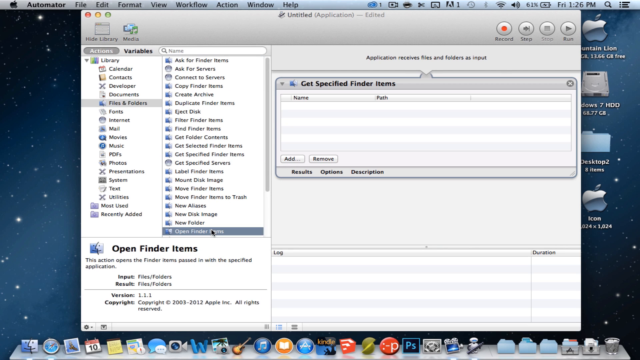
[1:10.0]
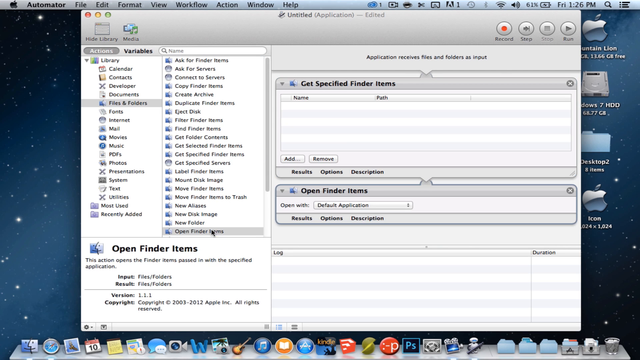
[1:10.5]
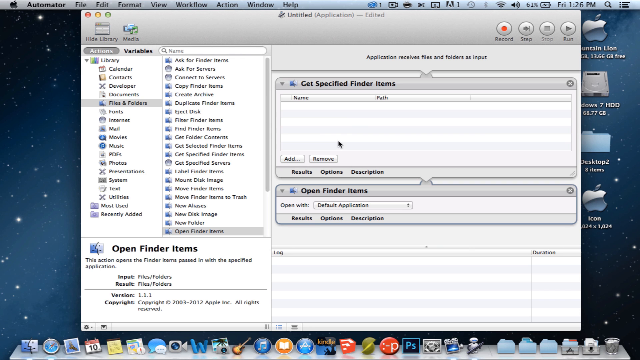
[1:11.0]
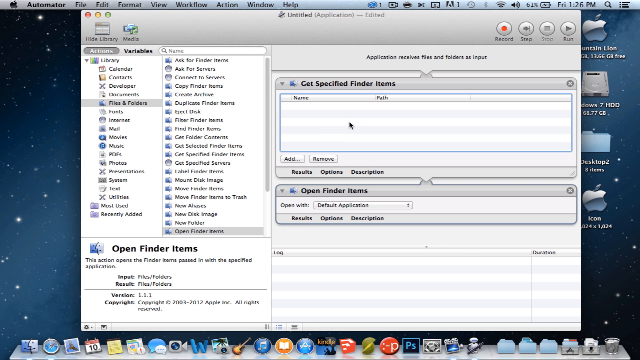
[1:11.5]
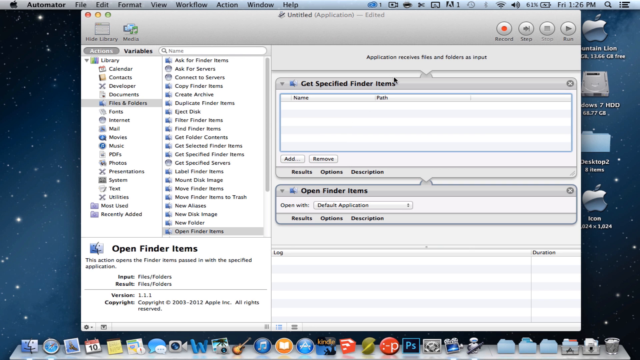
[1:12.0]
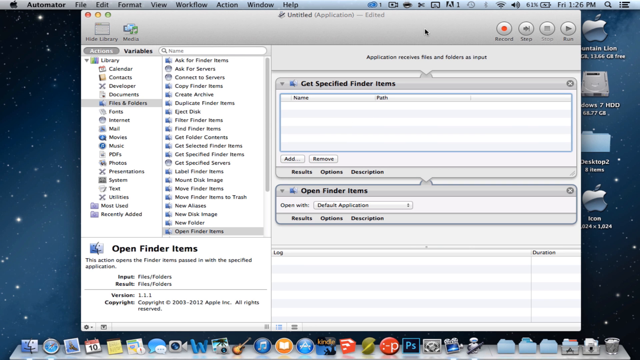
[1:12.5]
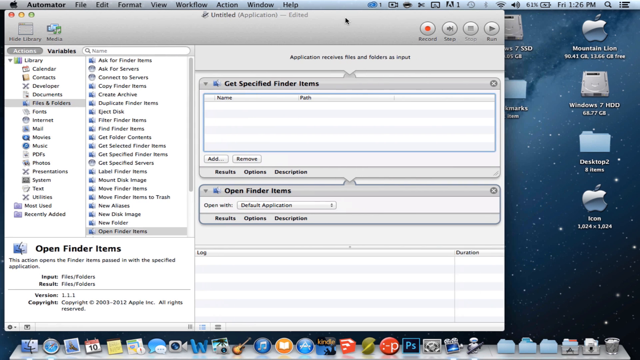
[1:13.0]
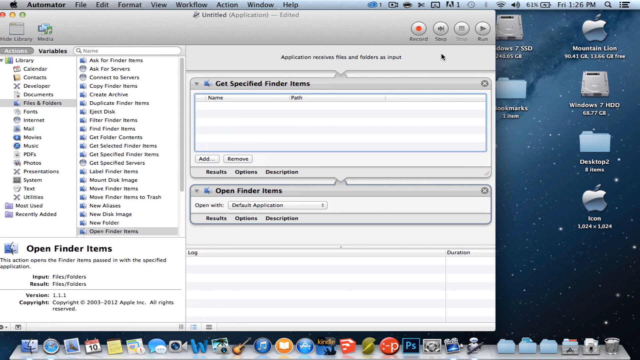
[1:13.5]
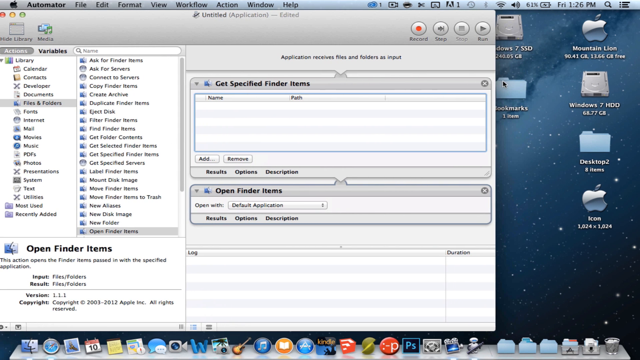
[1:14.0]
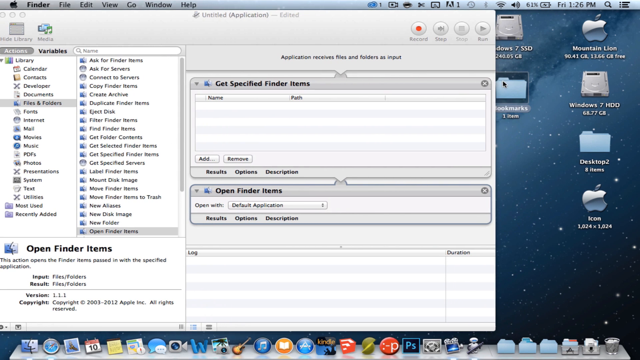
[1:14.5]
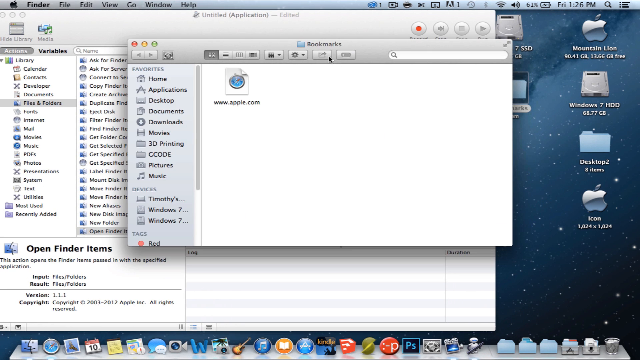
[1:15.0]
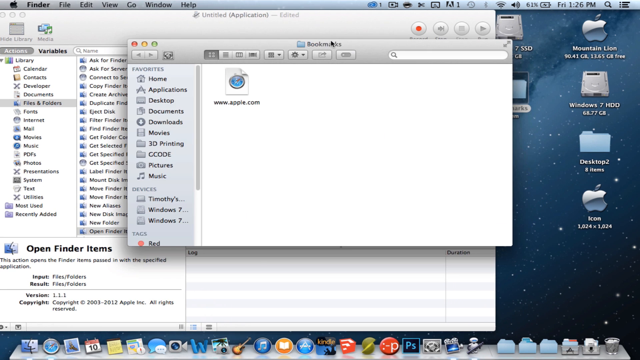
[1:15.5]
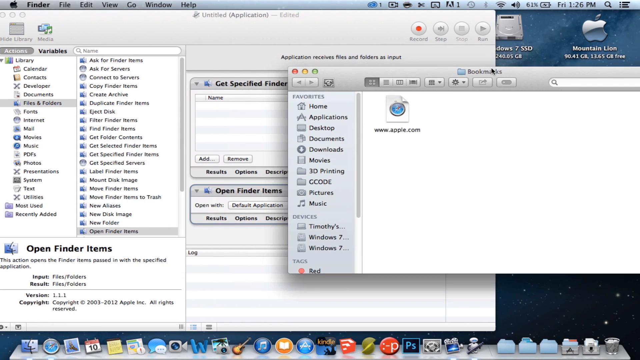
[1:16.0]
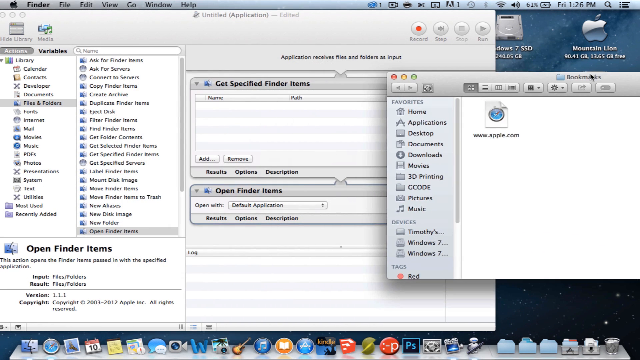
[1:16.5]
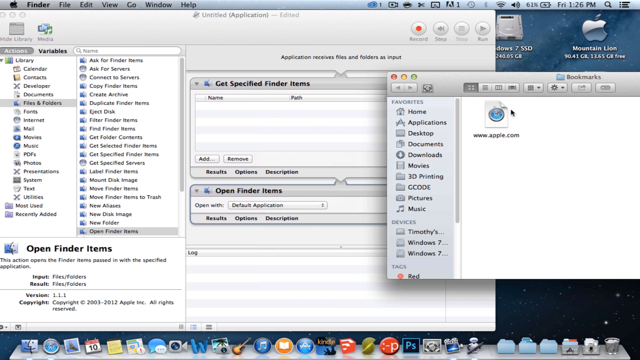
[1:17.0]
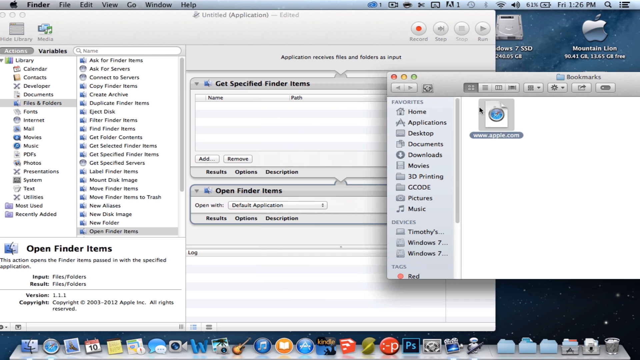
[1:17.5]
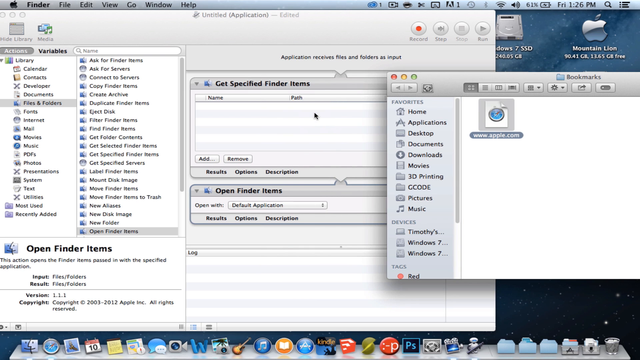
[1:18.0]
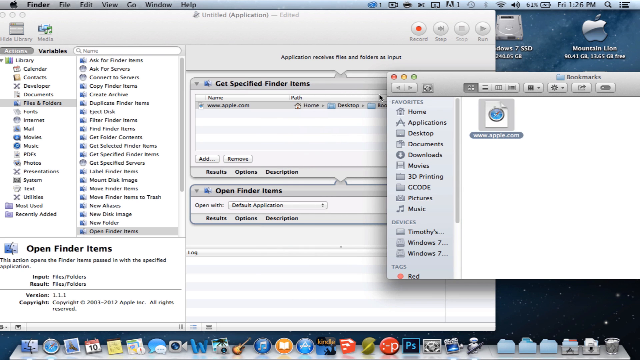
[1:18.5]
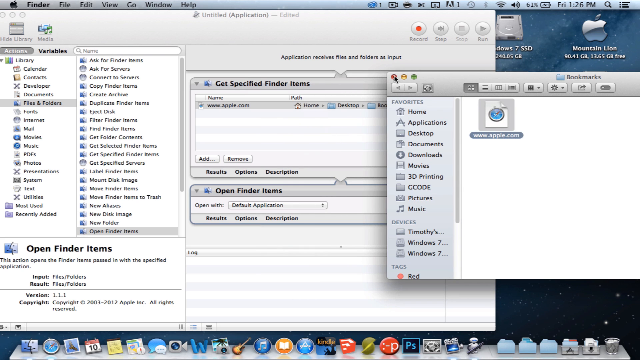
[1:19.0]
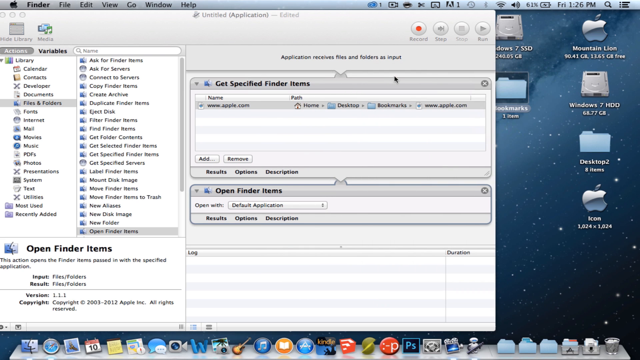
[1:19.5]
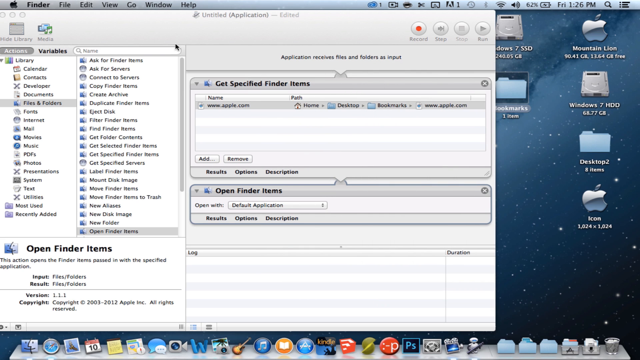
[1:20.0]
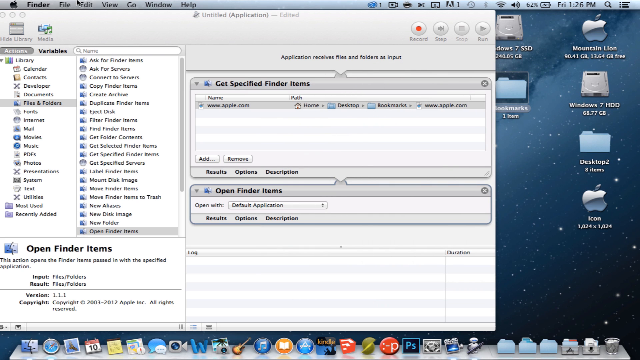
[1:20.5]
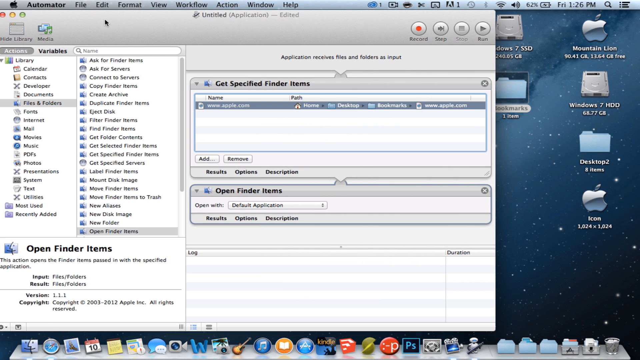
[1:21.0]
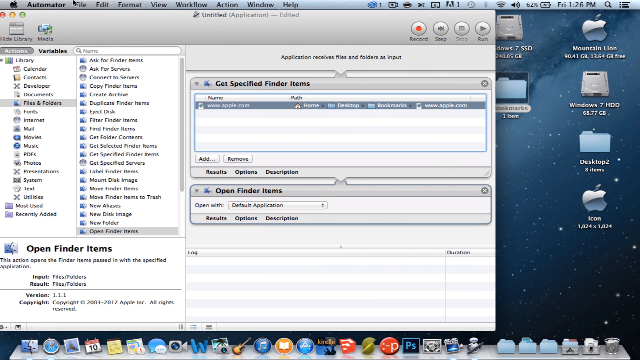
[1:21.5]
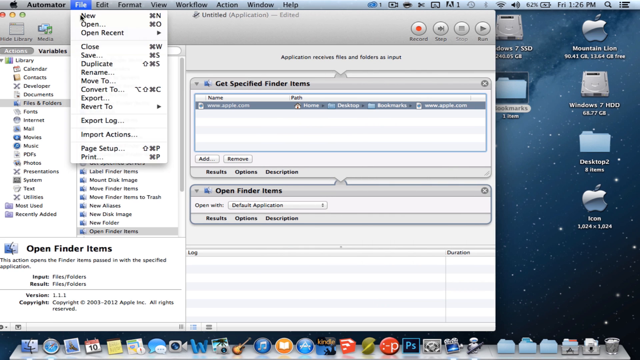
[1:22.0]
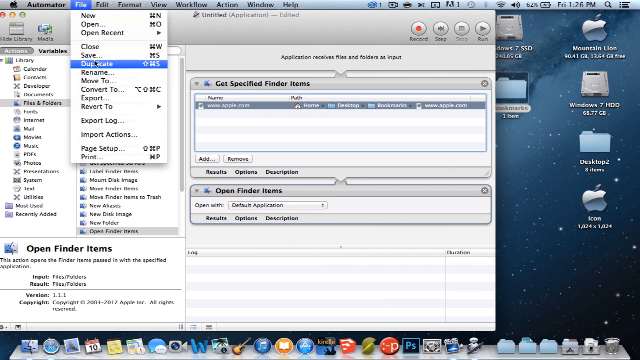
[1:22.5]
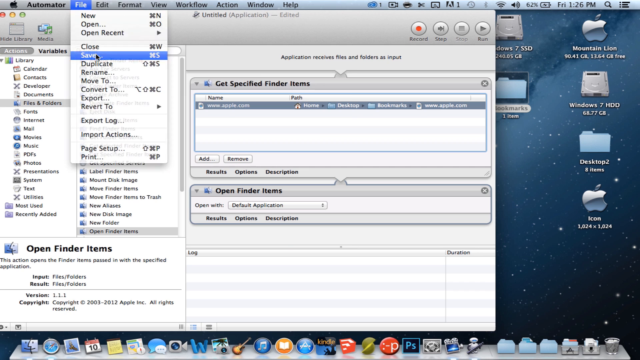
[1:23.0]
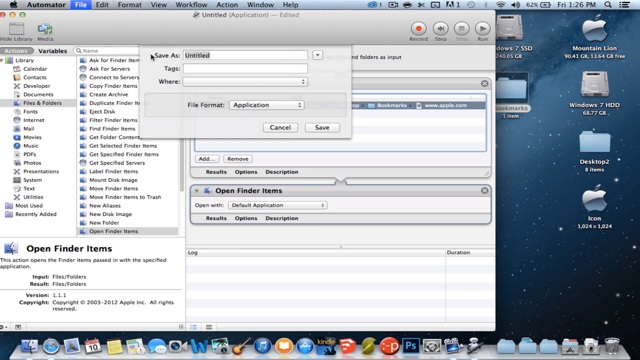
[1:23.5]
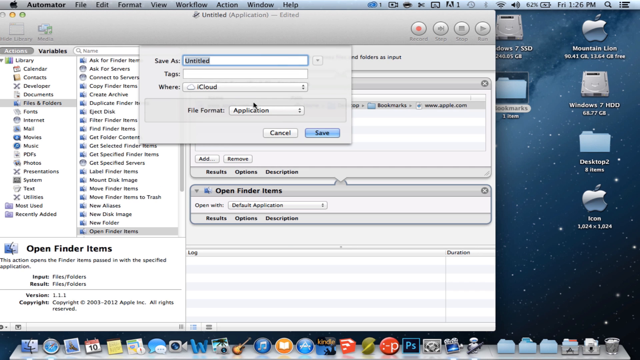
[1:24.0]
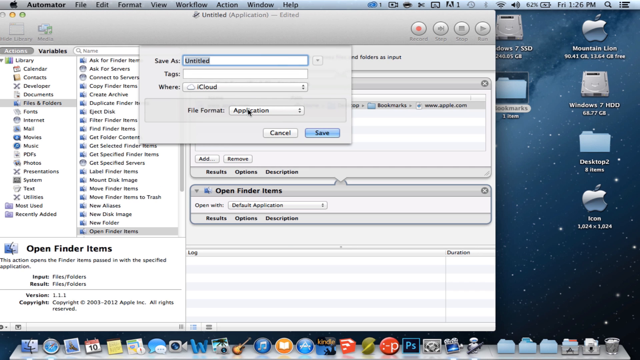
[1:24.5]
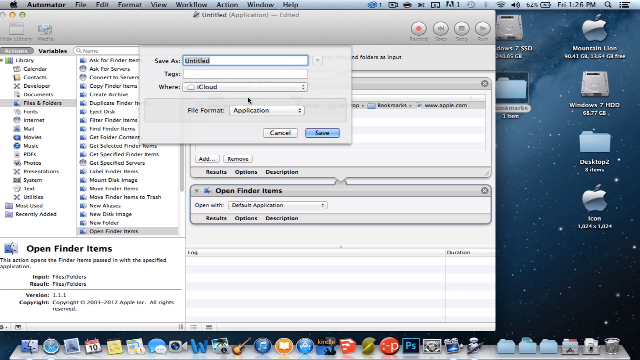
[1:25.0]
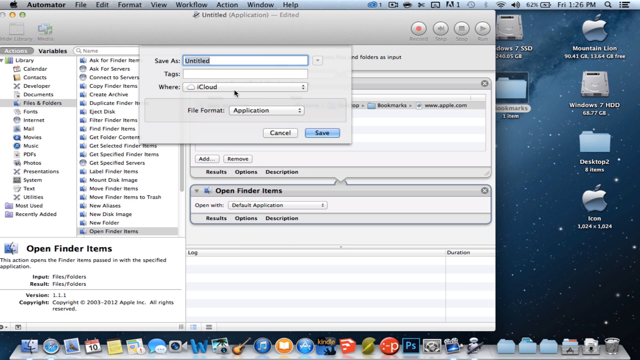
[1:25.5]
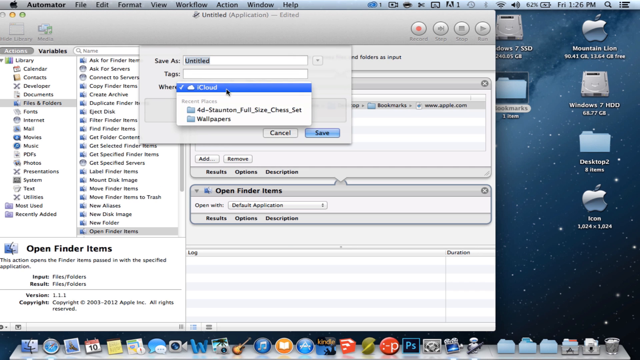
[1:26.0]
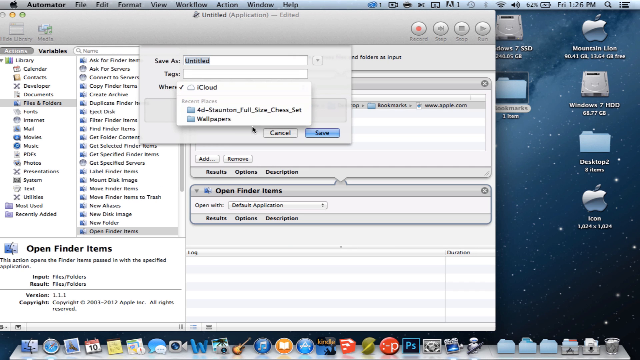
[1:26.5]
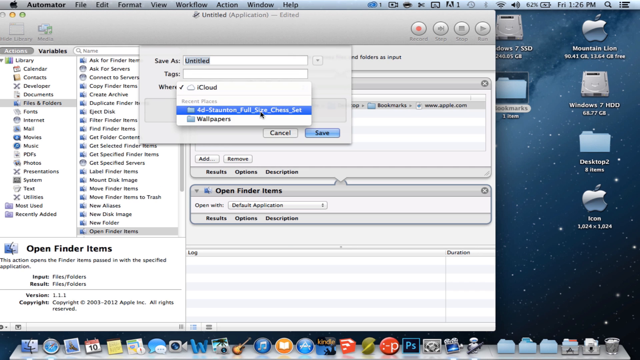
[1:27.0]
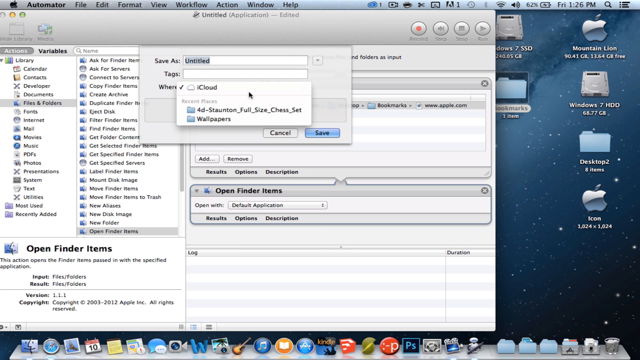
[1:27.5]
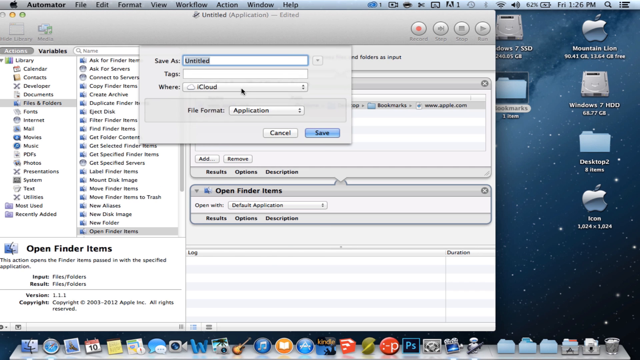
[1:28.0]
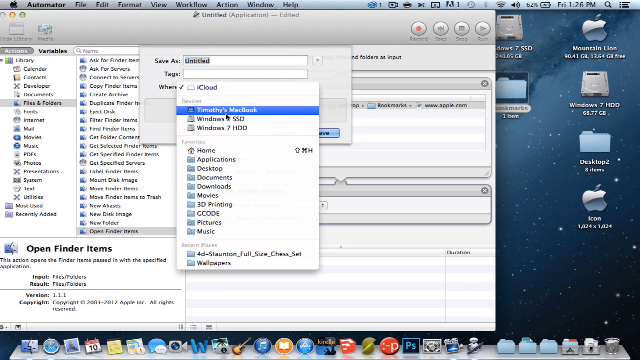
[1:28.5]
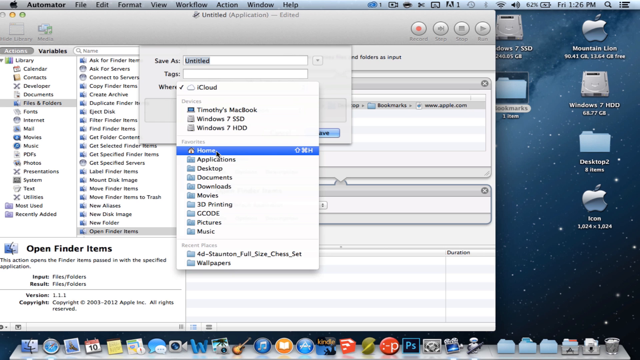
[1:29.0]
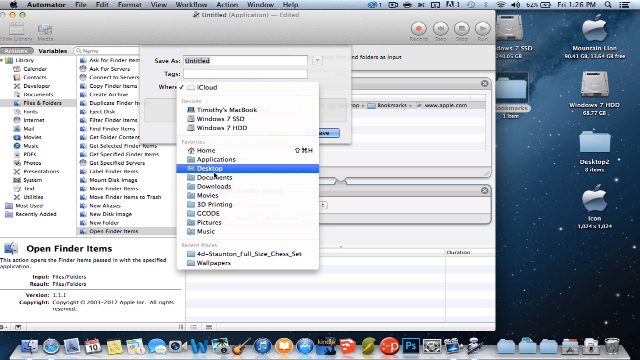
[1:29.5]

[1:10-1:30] Working in Automator, the user clicks into the Get Specified Finder Items section, then moves the Automator application window slightly to the left, making some space on the desktop. They click the Bookmarks folder on the desktop and move it to the right, then, inside the folder, select the Apple.com shortcut and drag and drop it directly into the Get Specified Finder Items action area in Automator. After this, they close the Bookmarks folder and save the Automator application directly to the desktop.